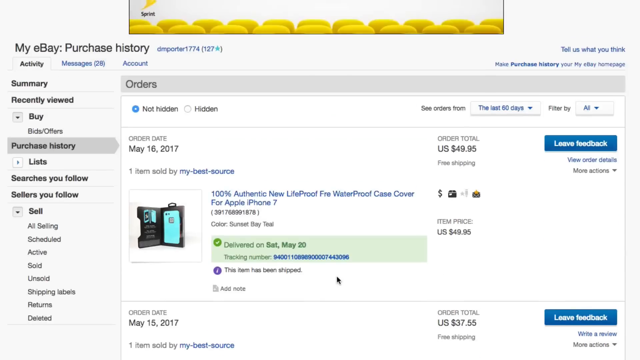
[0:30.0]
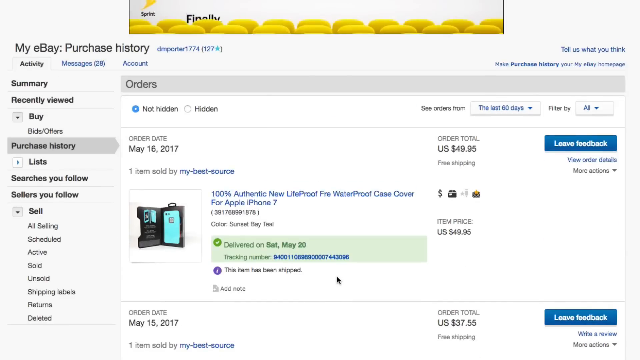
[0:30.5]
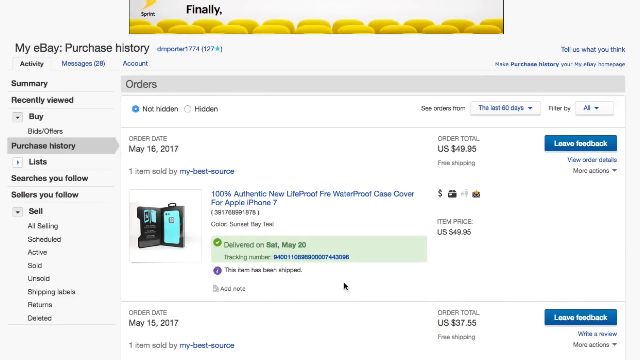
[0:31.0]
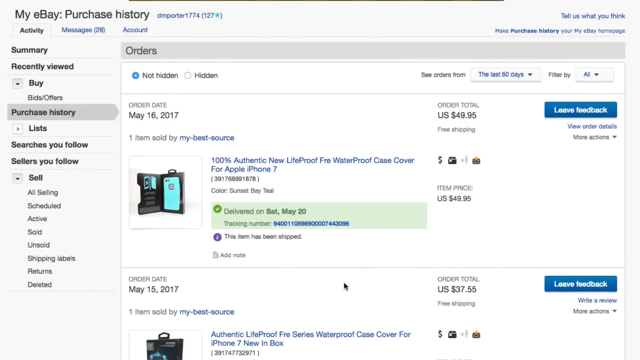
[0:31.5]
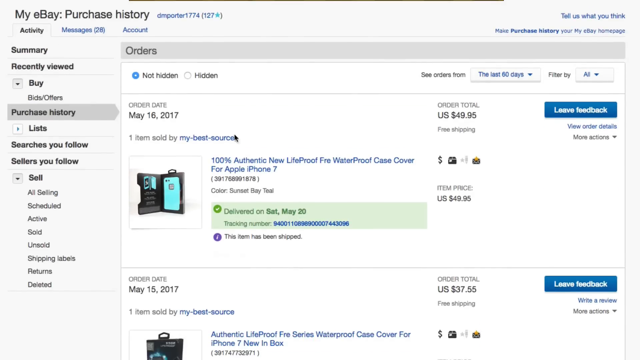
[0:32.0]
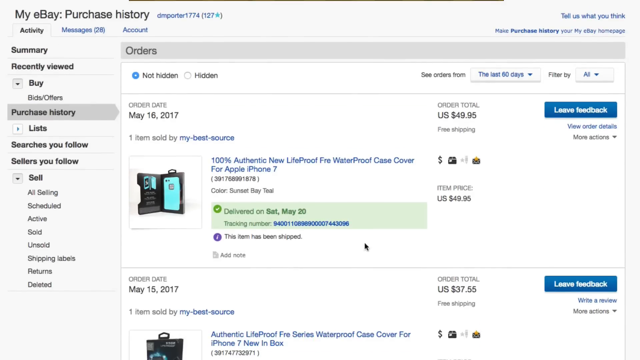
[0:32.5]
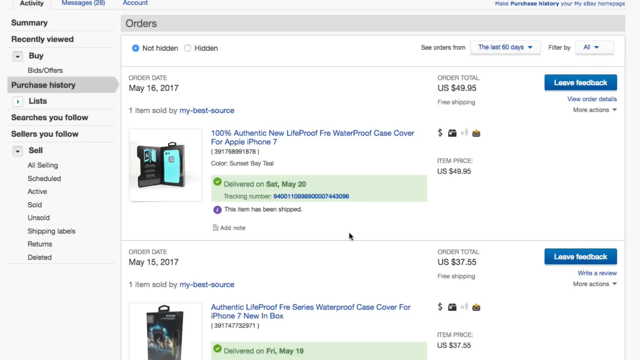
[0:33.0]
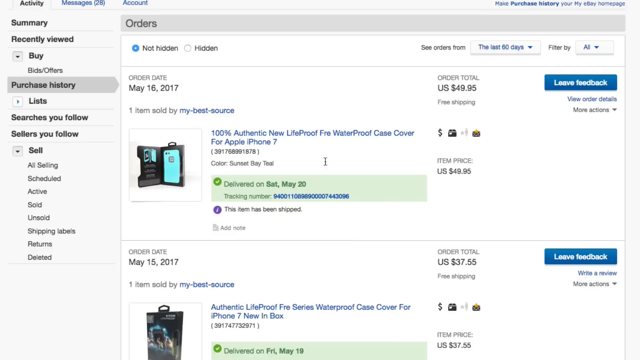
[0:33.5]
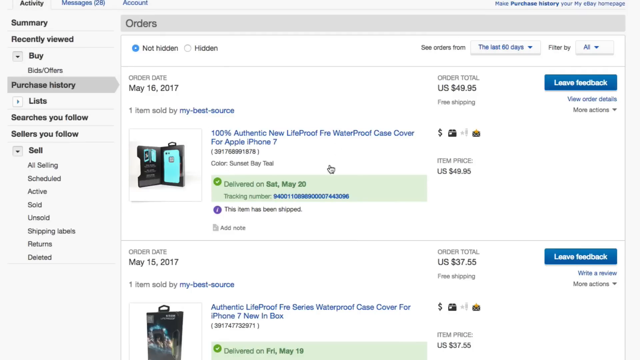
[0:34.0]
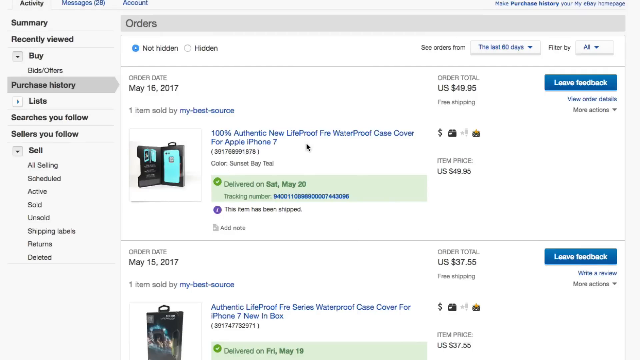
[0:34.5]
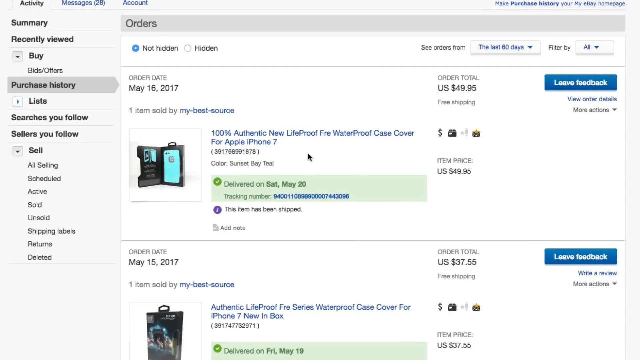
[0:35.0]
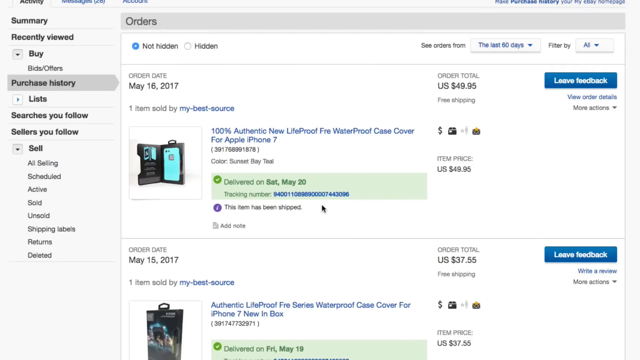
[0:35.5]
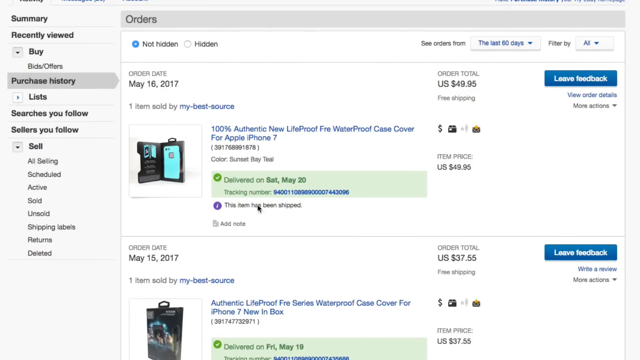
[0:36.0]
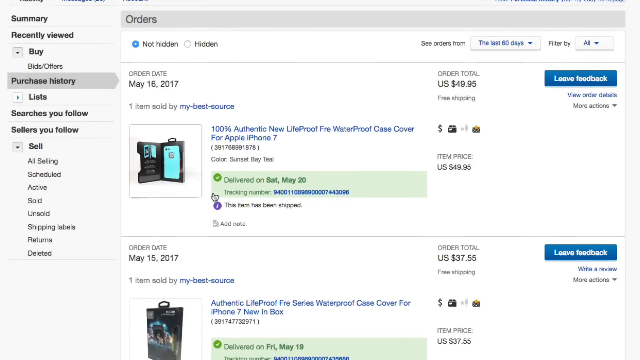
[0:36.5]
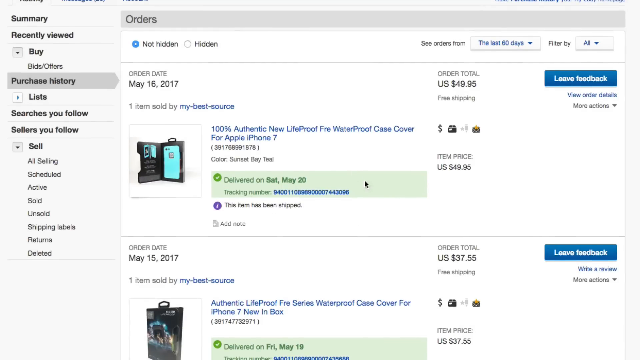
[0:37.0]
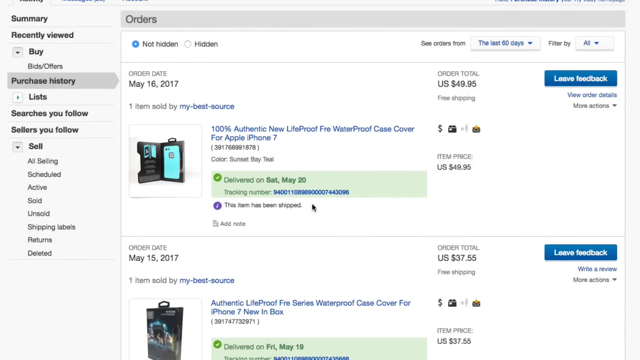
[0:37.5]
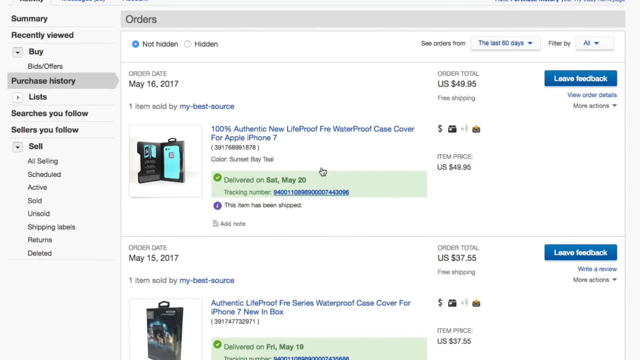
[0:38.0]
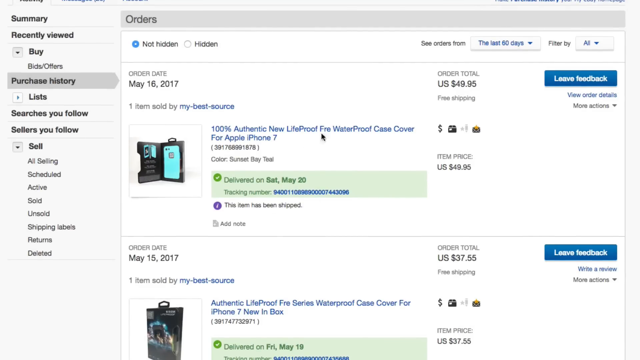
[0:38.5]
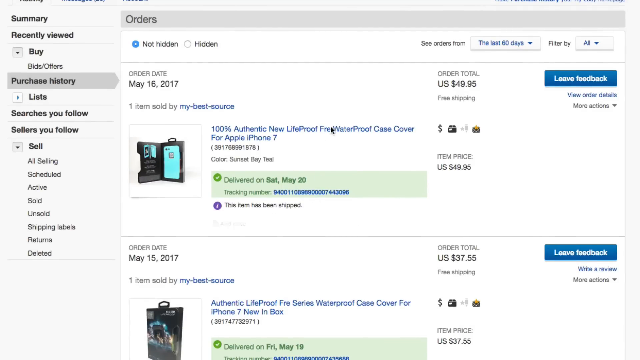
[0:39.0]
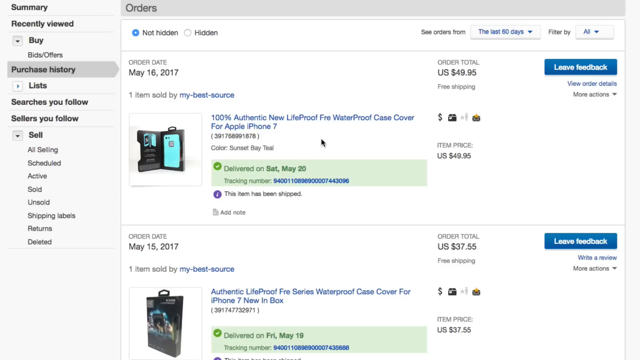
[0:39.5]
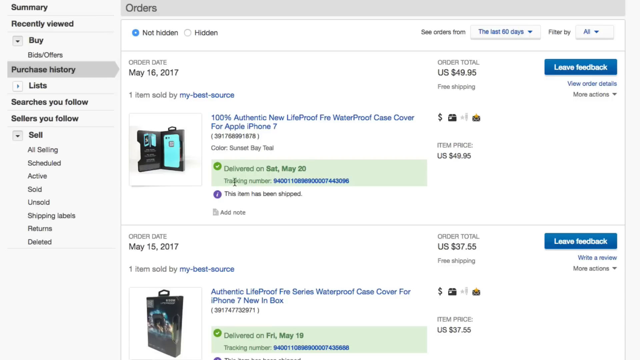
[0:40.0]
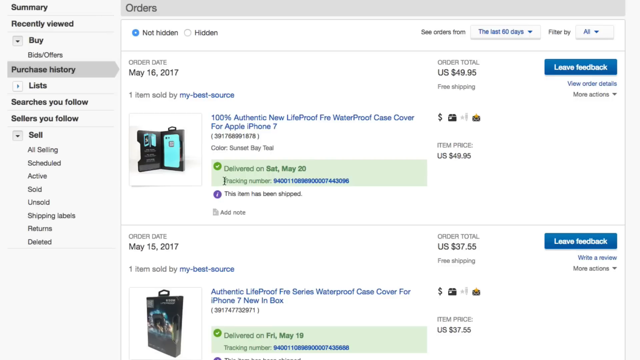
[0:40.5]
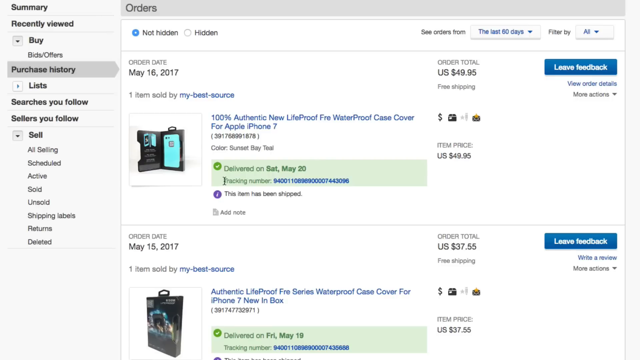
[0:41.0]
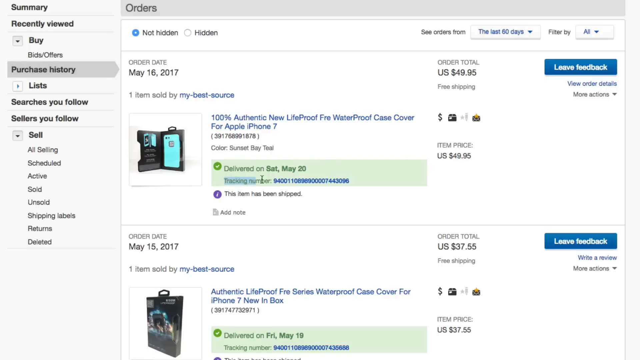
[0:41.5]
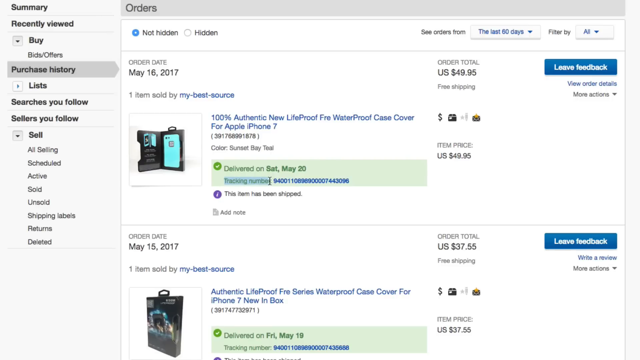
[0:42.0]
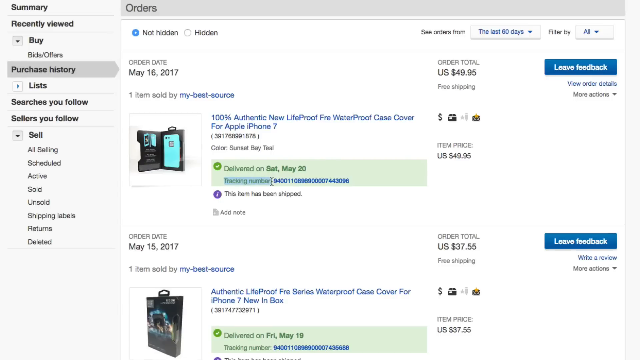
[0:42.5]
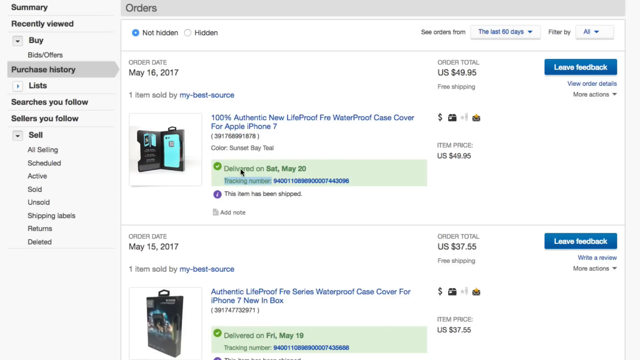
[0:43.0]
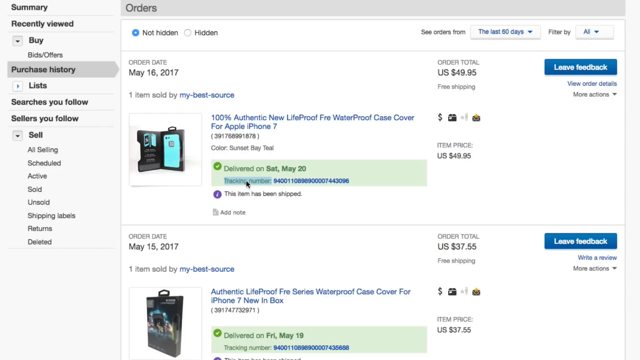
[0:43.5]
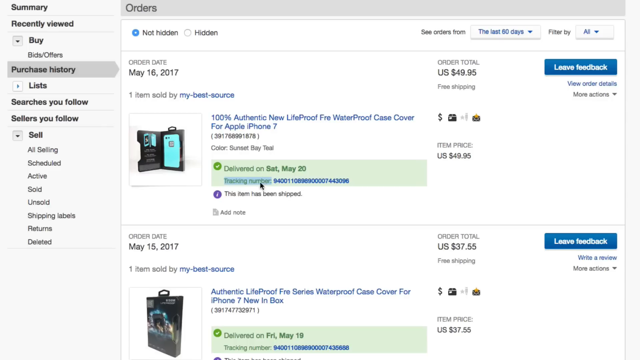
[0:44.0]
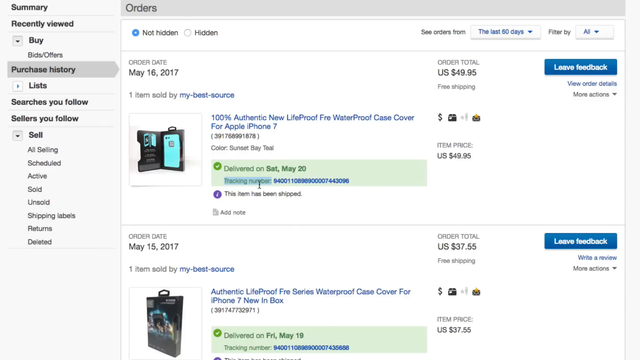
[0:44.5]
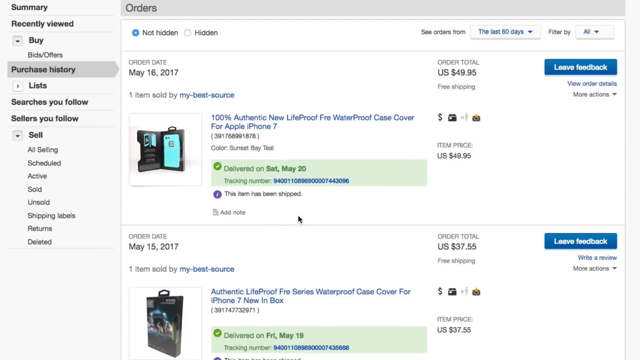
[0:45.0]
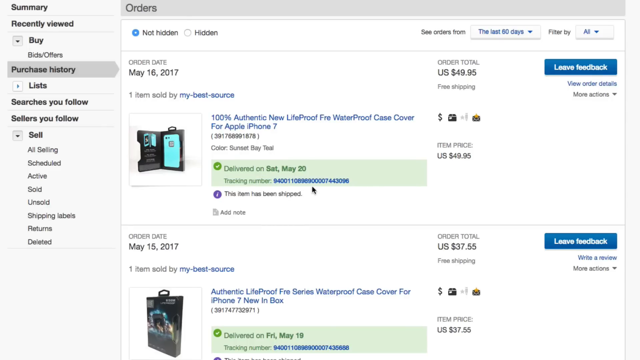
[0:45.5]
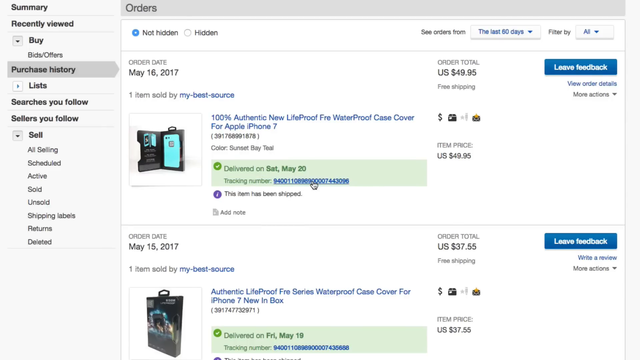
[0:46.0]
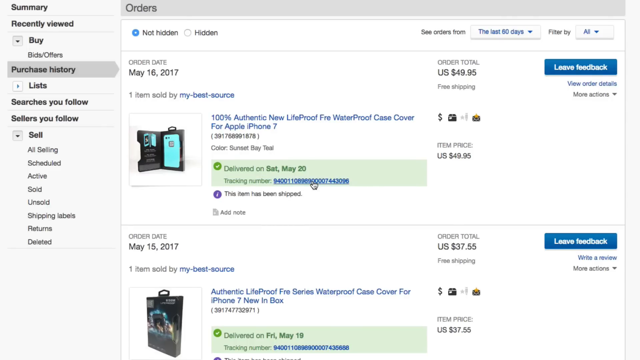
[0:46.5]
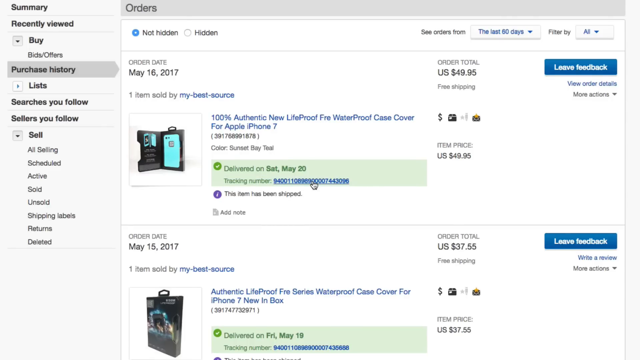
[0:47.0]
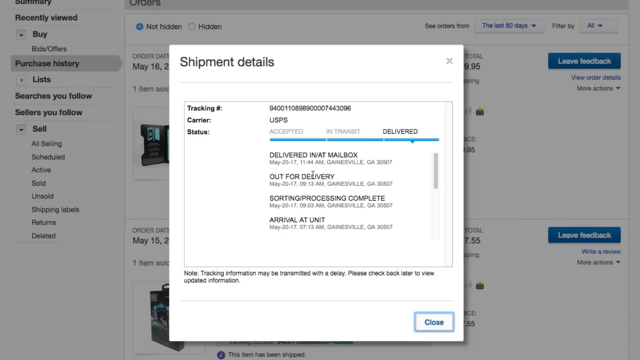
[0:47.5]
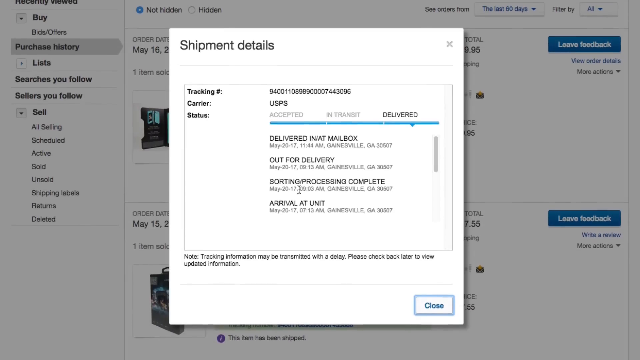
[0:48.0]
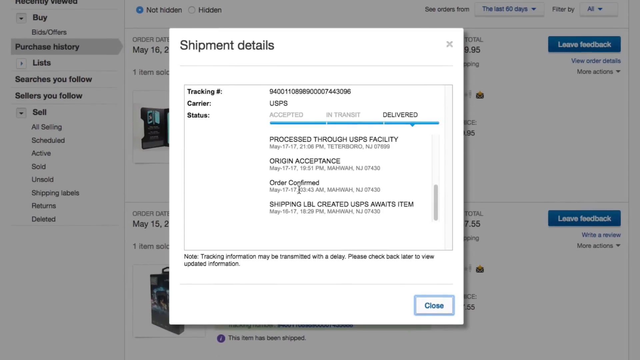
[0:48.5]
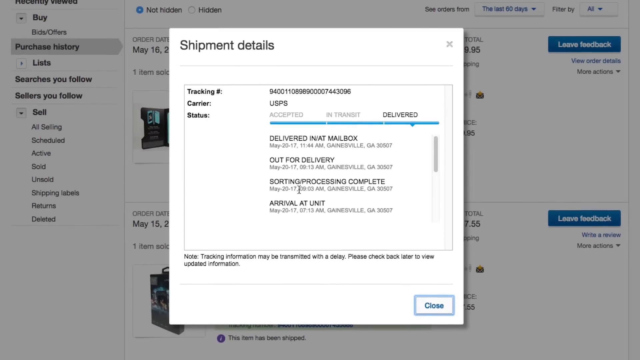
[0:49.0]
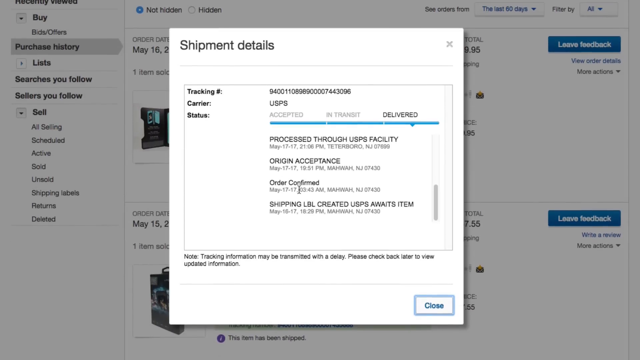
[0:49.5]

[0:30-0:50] The user scrolls all the way back up to the beginning of the product history page, apparently using the mouse as a pointer to highlight parts of the page. They circle around the body of the first product, the May 16th order, moving the mouse up, down and around various portions of the text. They highlight the delivery time and the tracking number, click and kind of scroll over, then circle with the mouse again. They click on the tracking code, and the delivery information kind of pops up on a splash screen in front of the previous webpage without changing websites. The user scrolls down to show the details of where the shipment came from and where it was delivered to, seemingly continuing to use the mouse as a pointer to highlight.